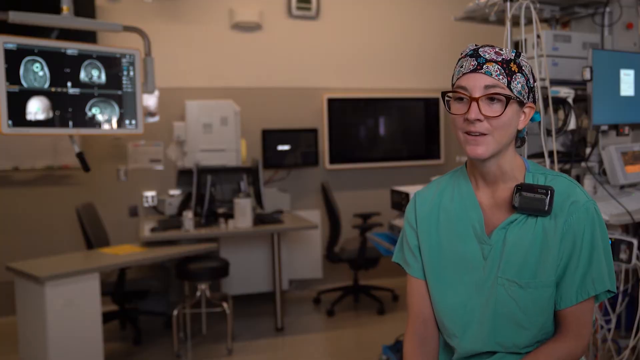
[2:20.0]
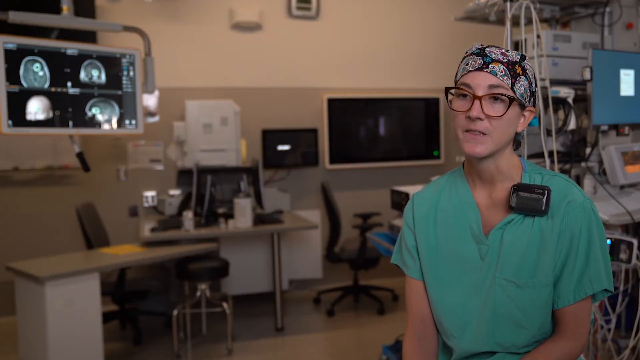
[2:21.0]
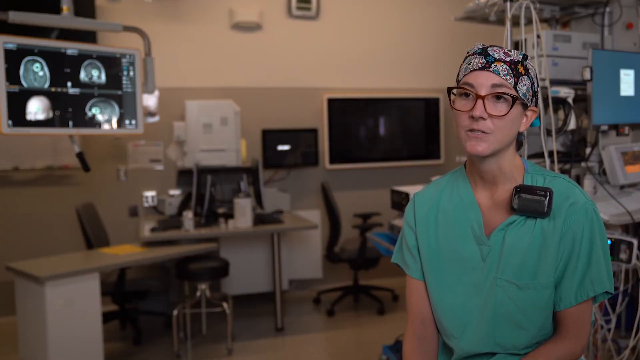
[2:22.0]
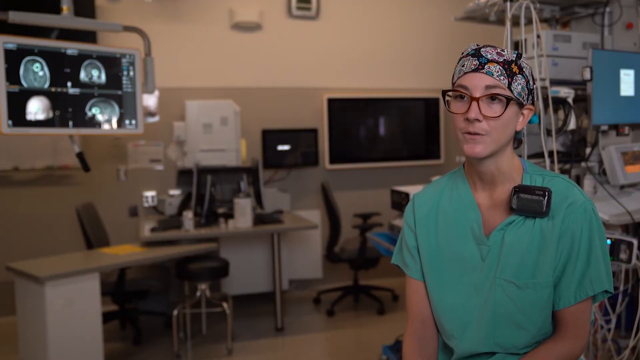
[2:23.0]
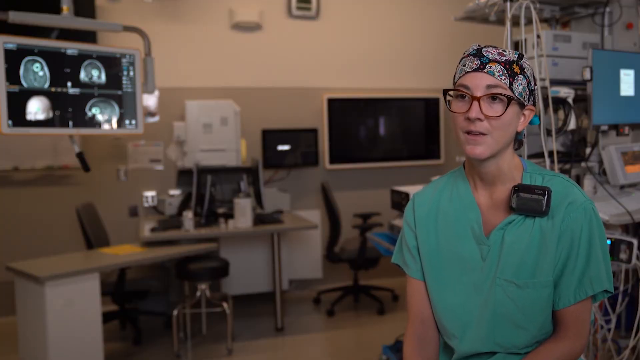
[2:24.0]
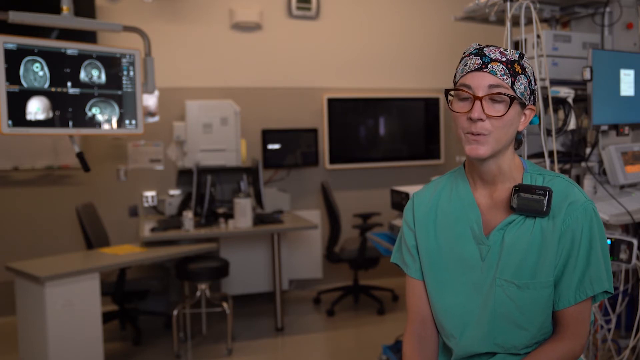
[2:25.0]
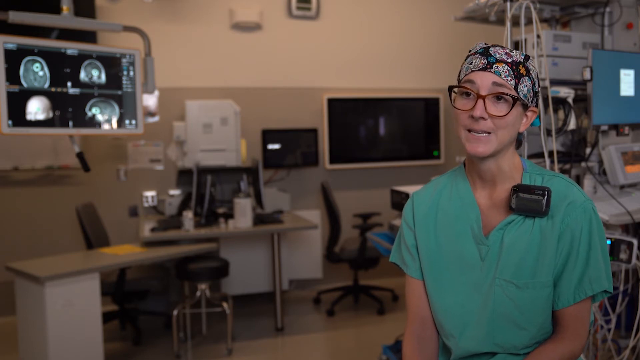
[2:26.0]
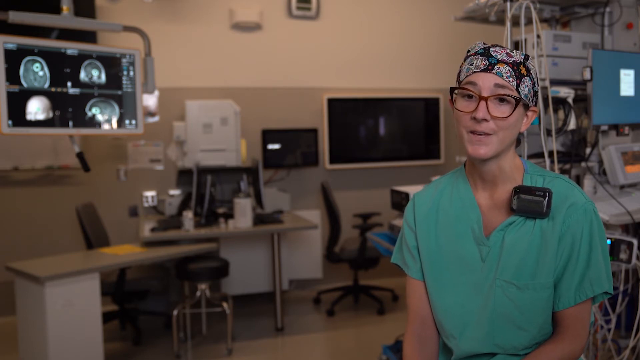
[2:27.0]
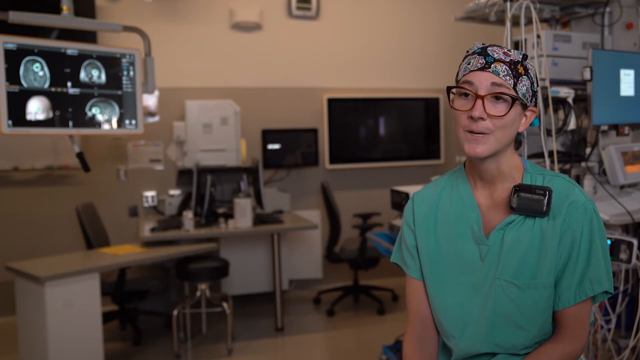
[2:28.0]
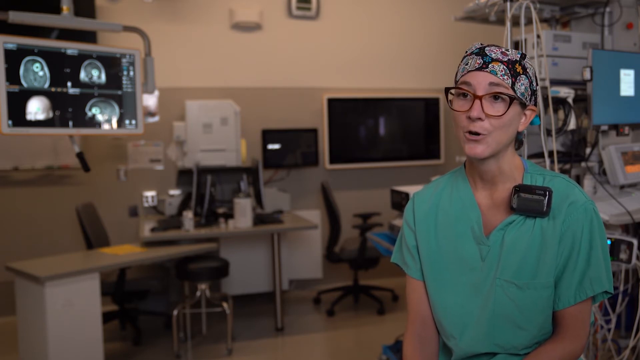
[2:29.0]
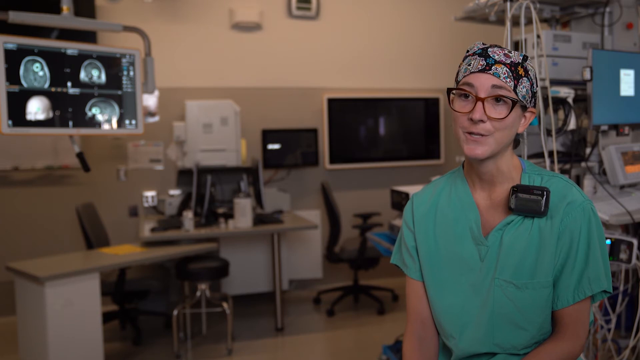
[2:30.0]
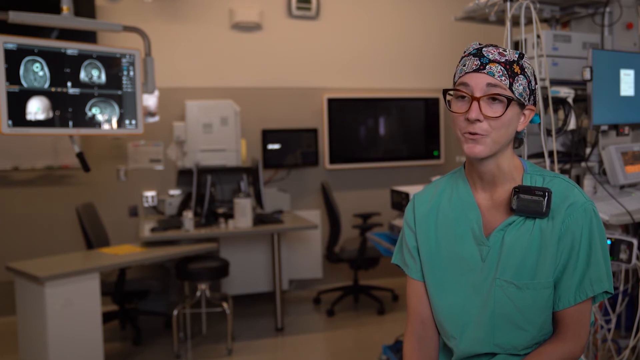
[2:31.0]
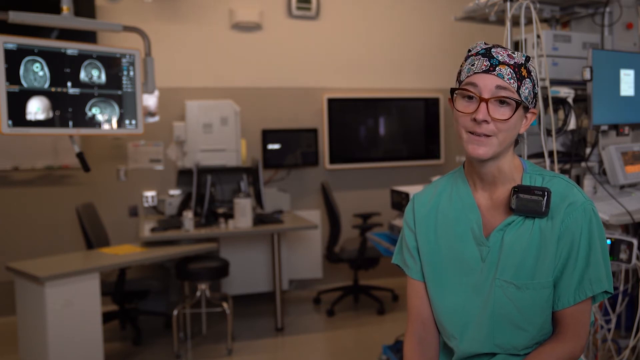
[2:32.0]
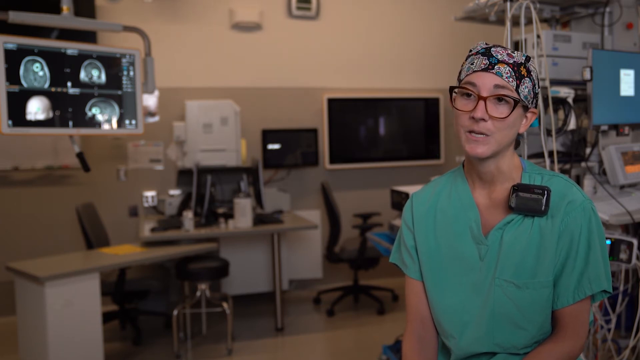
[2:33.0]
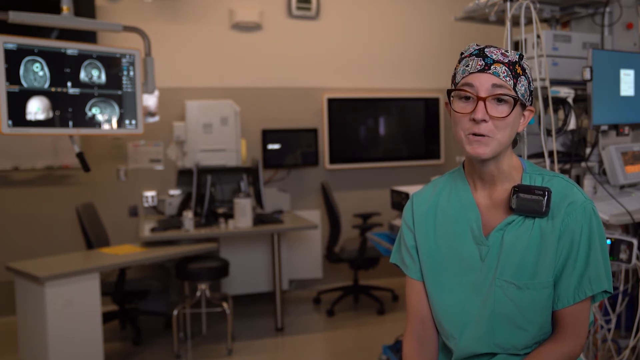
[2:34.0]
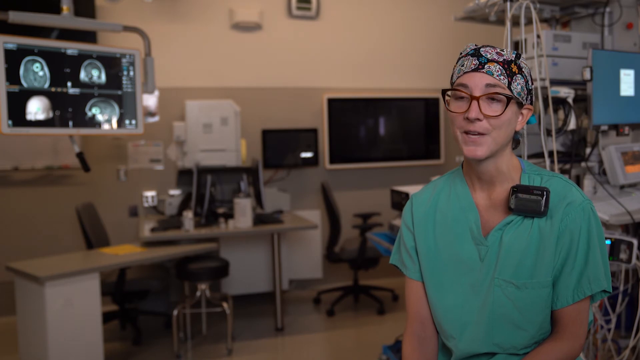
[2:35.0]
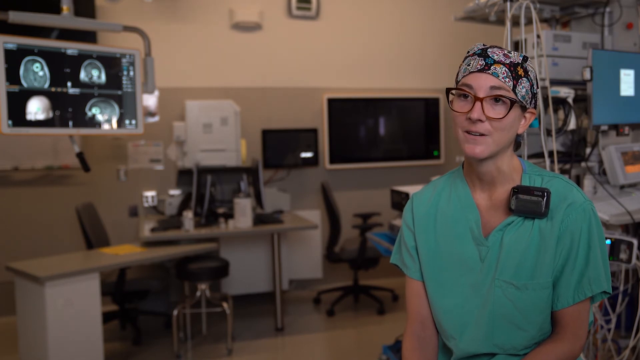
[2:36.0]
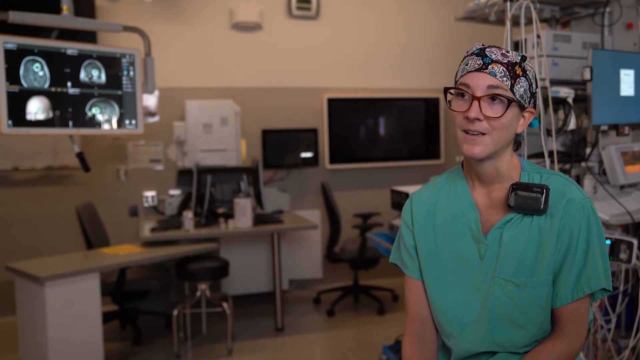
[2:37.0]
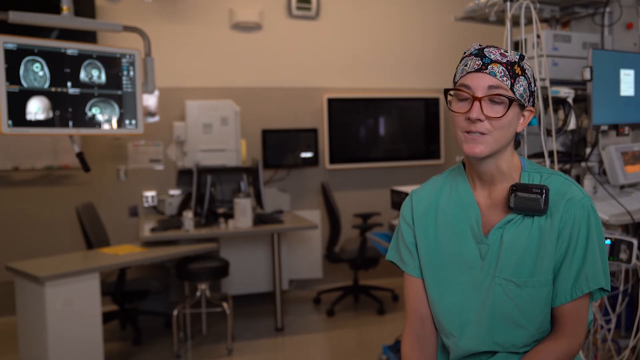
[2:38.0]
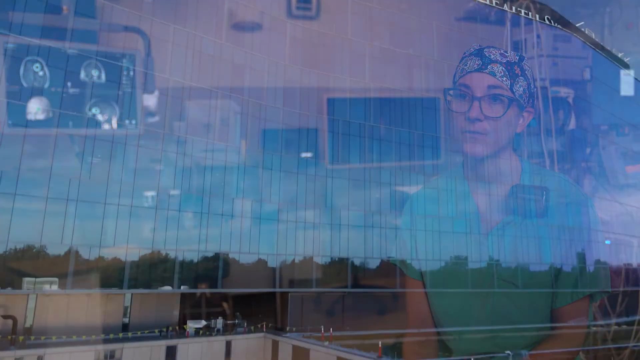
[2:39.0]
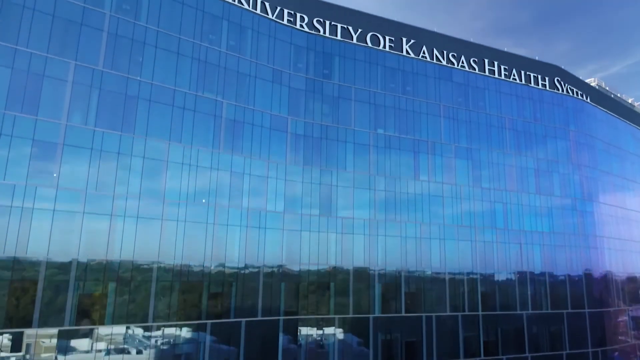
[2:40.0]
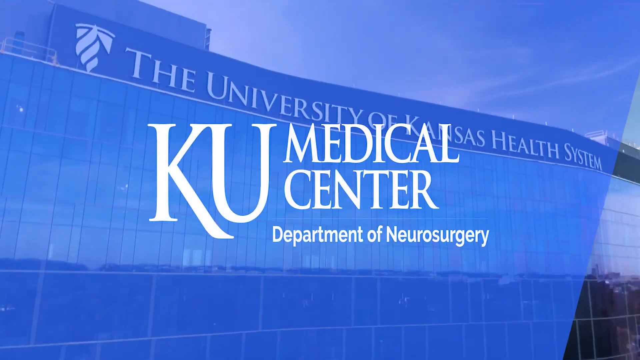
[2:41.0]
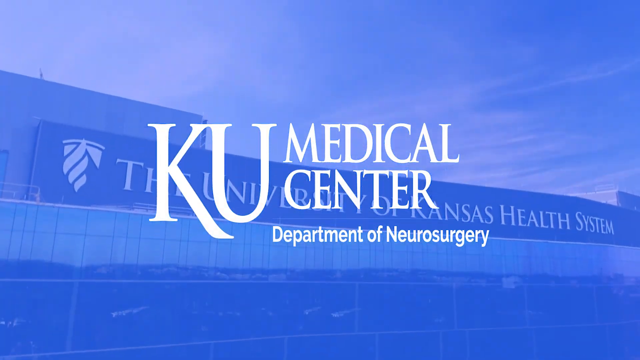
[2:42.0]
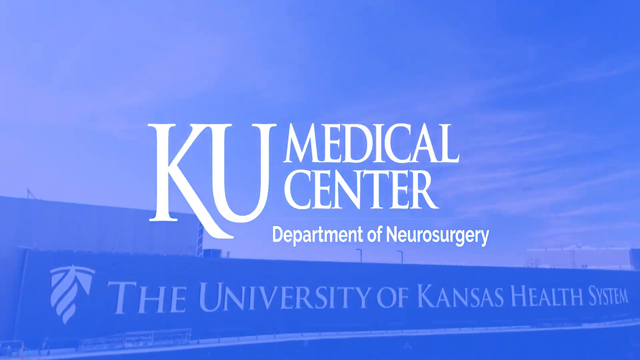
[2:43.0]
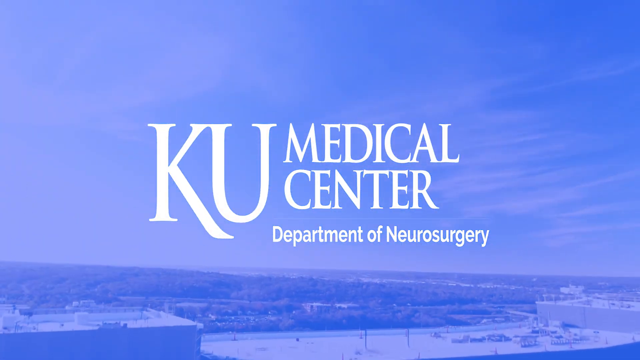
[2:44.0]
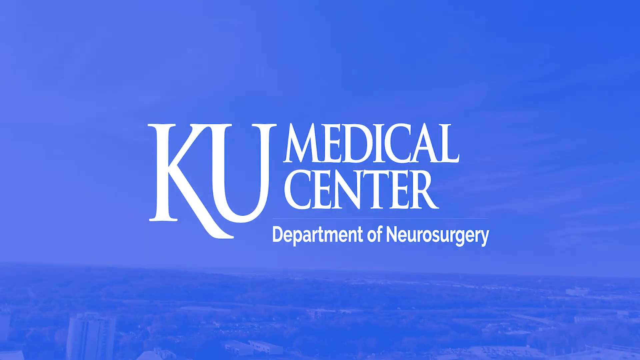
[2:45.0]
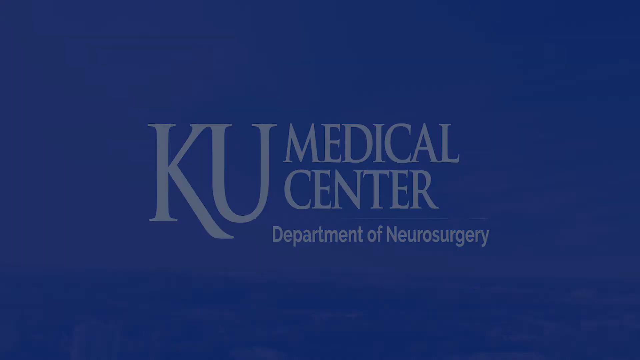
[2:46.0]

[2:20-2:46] A white woman sits on the right side of the frame. She wears very large glasses, reddish or brownish in the middle and black on the outer parts, a black head bandana or doctor's hat with large white circular shapes, and a greenish shirt with a black device on her left collarbone. The background is a doctor's room with a number of monitors; the left monitor looks like a brain scan. She talks to someone off camera, slightly nodding her head throughout and breathing slowly, with a very calm composure and a very pleasant expression, her arms at her sides. The scene changes to footage of the large building, again moving from its bottom and gliding upwards. The building again shows its name in white bold text, "University of Kansas Health System", and it is daytime, with the sky above the building mostly clear and bluish. The shot changes to a lightly transparent blue background with text reading "KU Medical Center, Department of Neurosurgery".